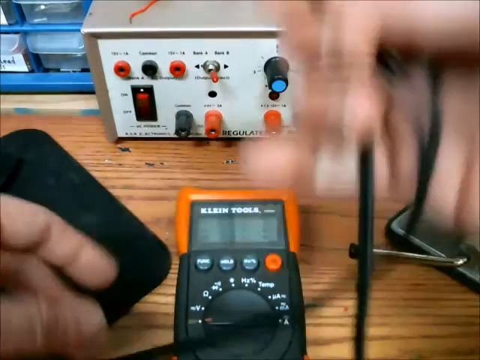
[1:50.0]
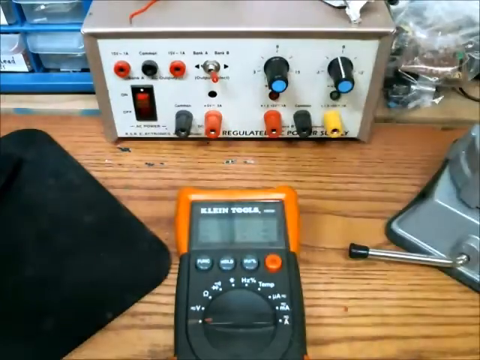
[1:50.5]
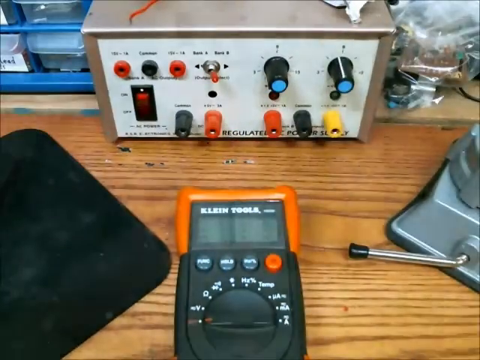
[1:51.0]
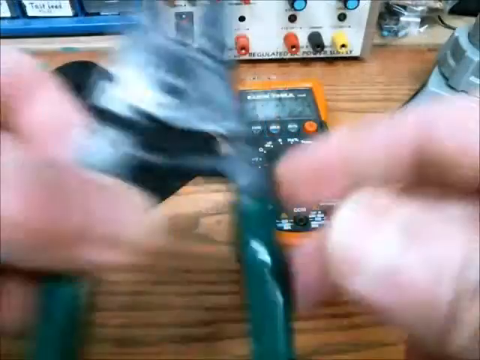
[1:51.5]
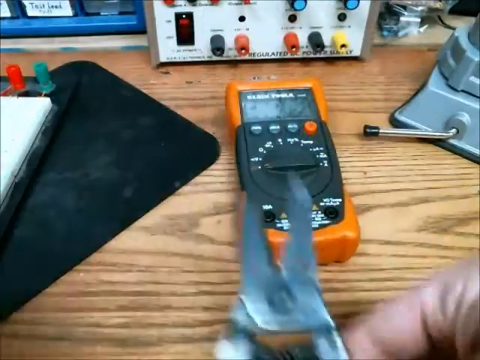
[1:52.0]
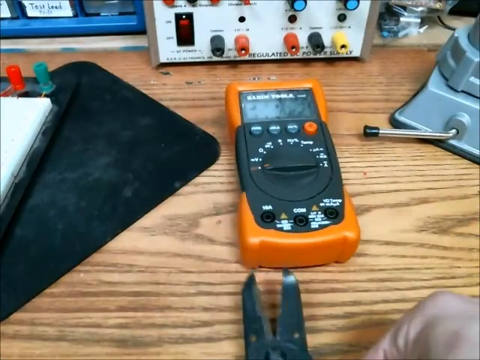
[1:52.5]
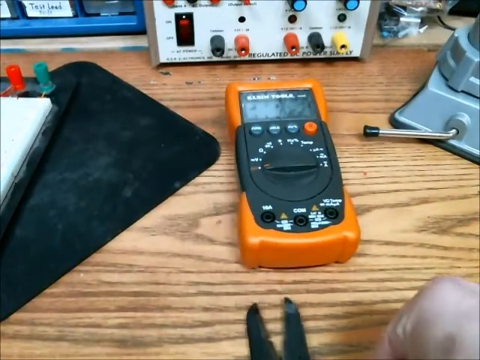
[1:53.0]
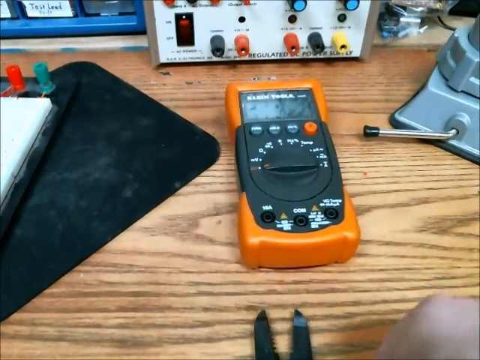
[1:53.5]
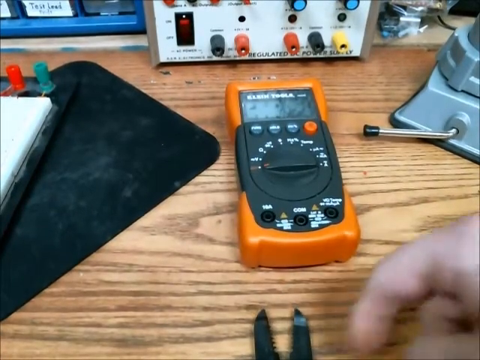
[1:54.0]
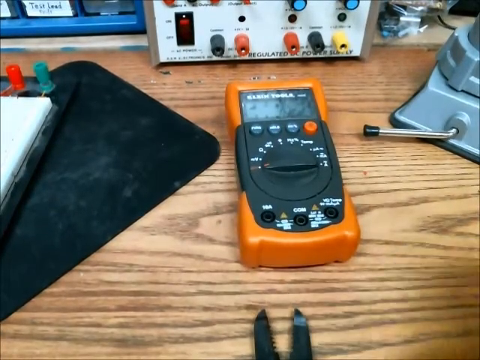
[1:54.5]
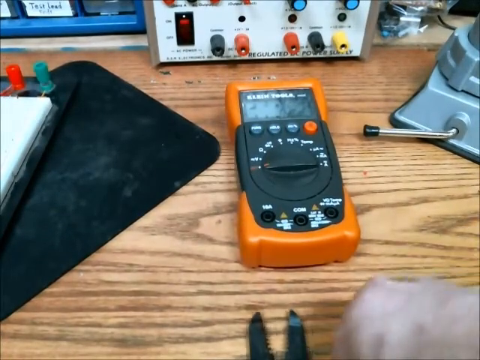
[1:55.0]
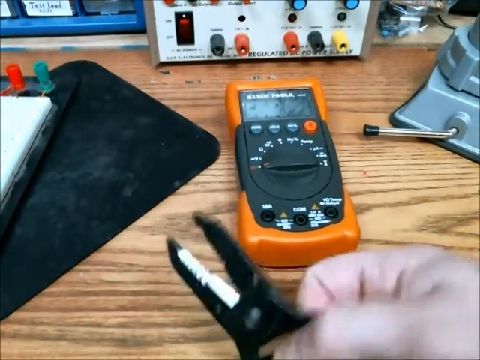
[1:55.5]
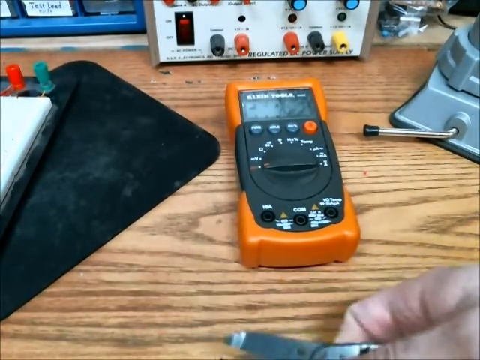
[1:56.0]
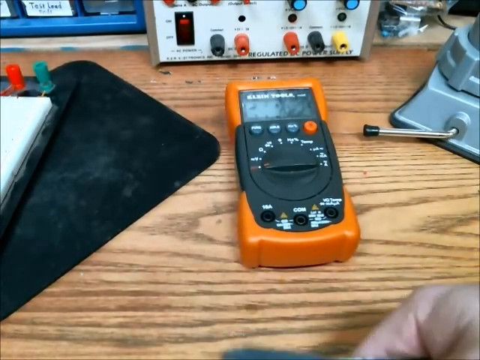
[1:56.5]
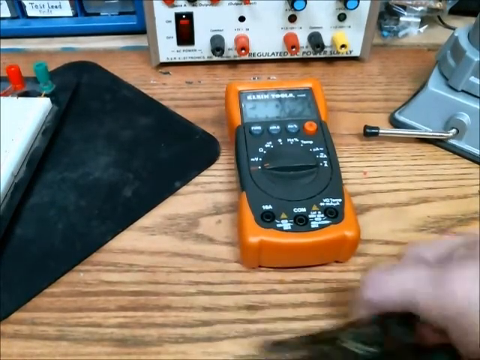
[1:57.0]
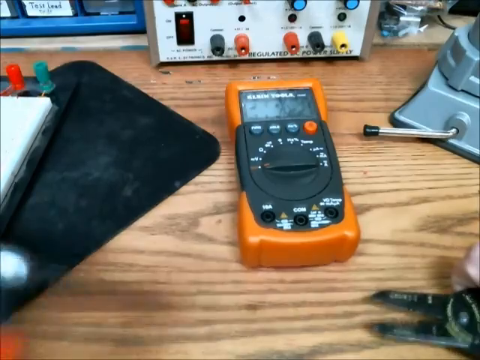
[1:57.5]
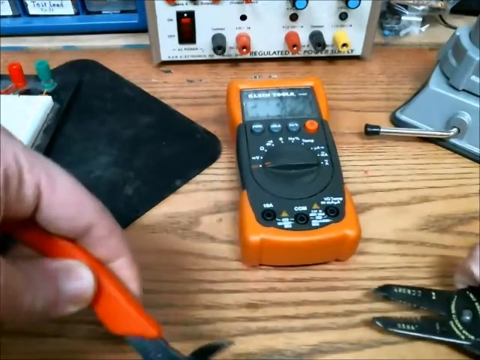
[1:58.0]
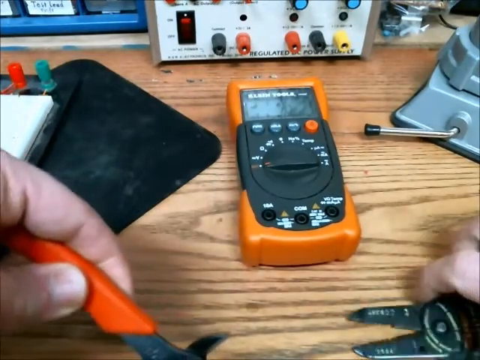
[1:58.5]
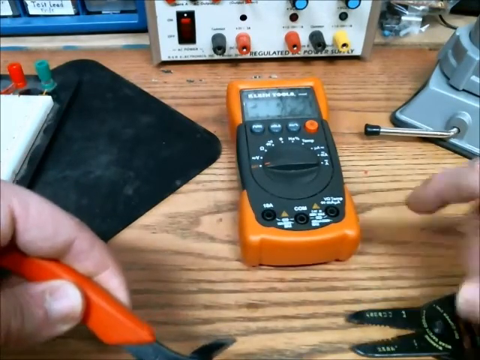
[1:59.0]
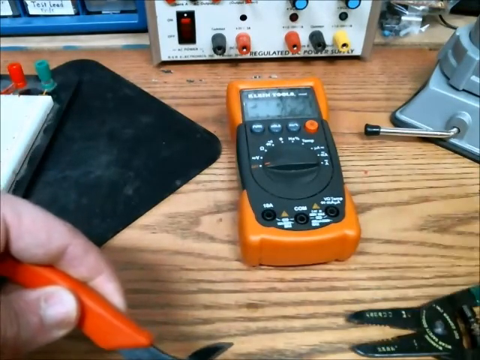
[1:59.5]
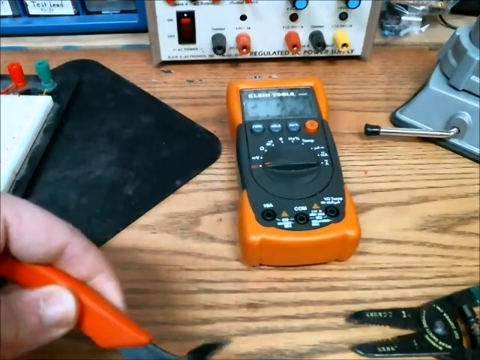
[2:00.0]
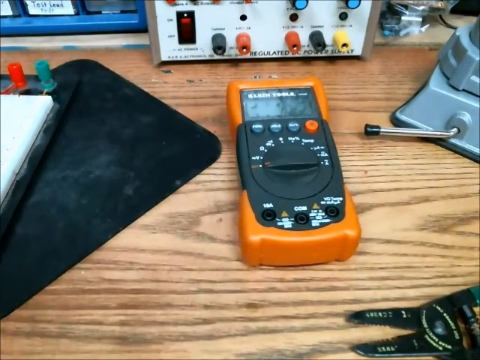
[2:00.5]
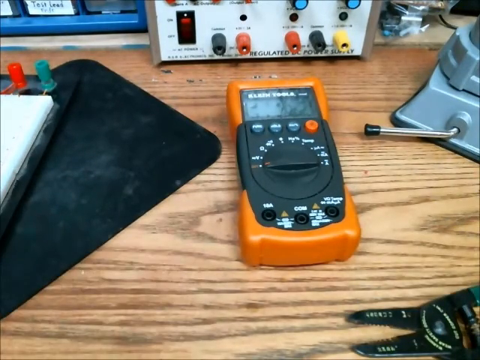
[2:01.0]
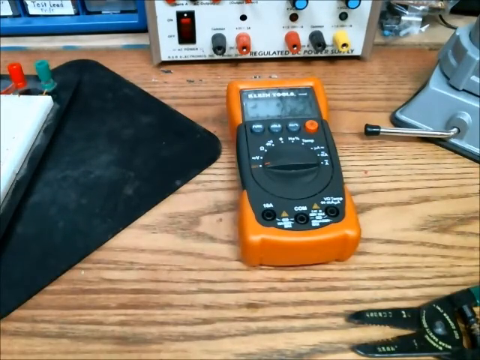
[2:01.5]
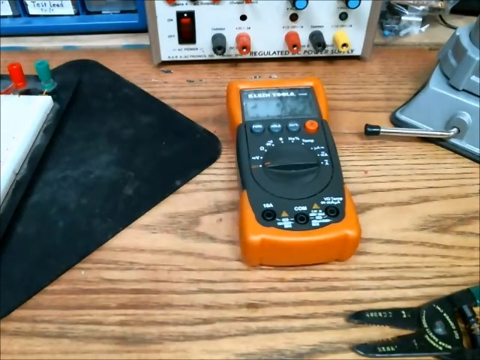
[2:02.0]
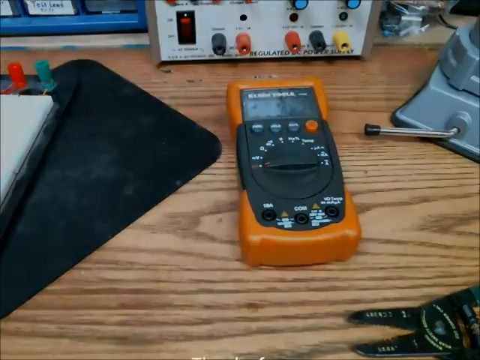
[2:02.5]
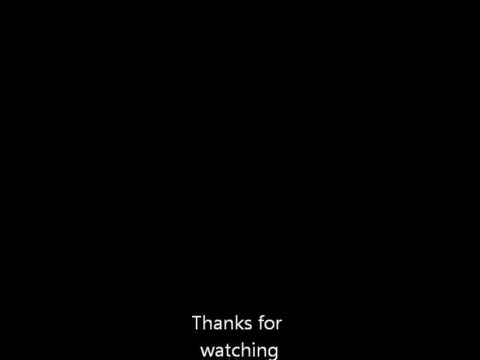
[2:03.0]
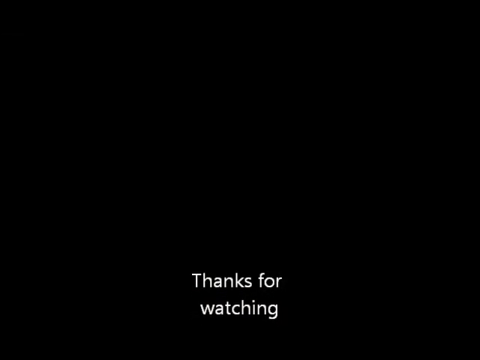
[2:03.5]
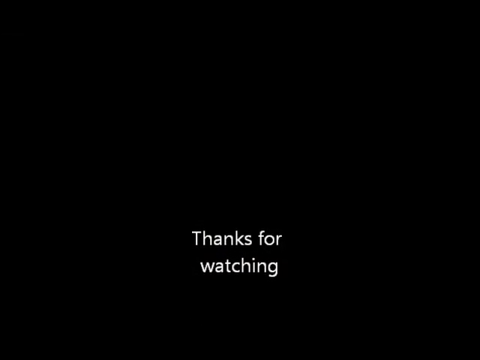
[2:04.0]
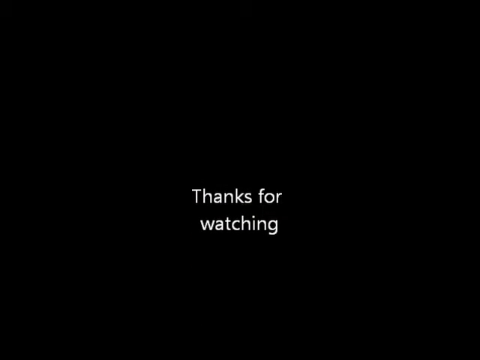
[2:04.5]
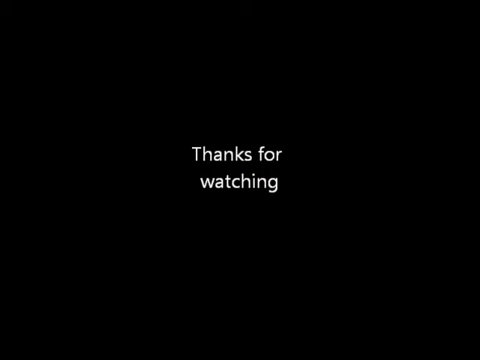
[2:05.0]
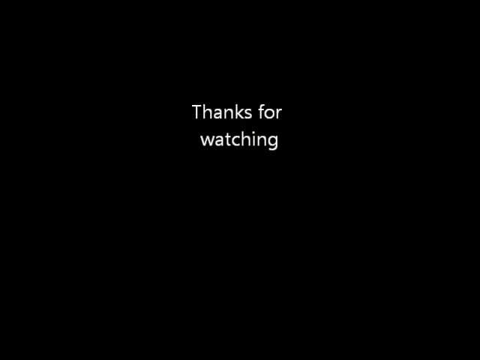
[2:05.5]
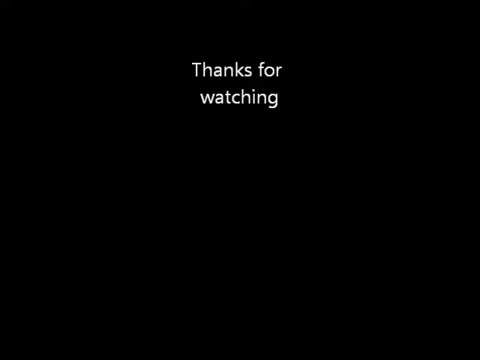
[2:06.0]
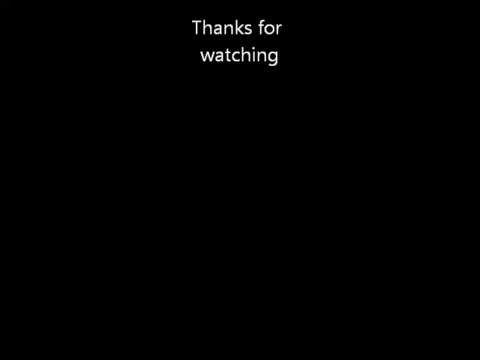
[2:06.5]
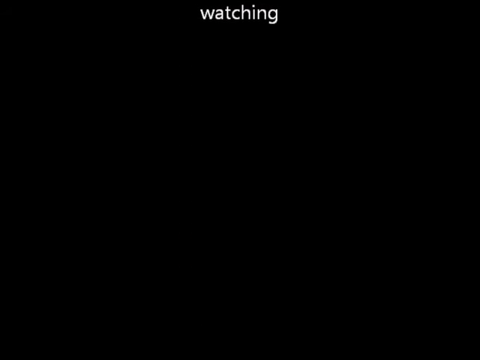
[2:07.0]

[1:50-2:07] A blurry hand is on the screen with the fine tools device, which is orange and black in the center, along with the electronic box with the two black knobs with blue circles on the end. To the left, a little of the cubbyhole unit is visible. The person brings in a pair of pliers with the right hand and, with the left hand, what looks like another set of pliers. The video ends with text reading "thanks for watching."